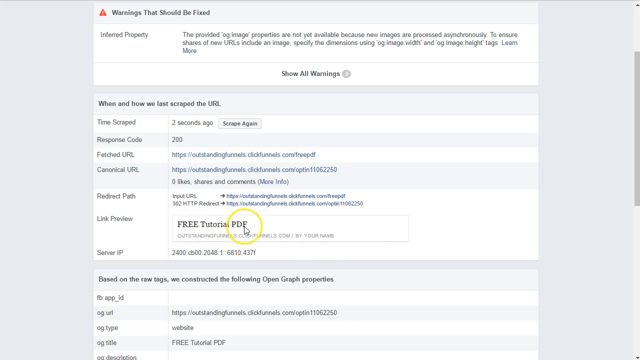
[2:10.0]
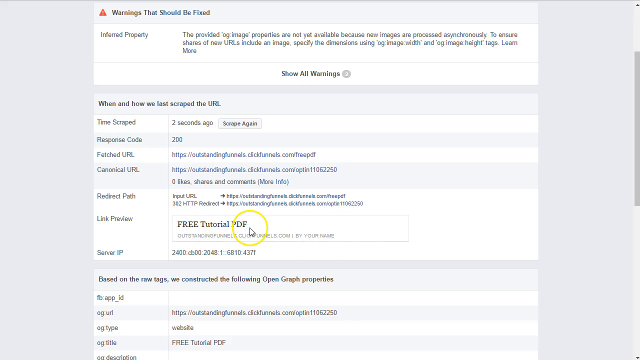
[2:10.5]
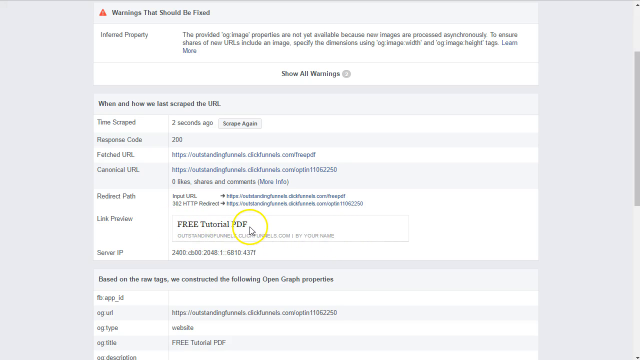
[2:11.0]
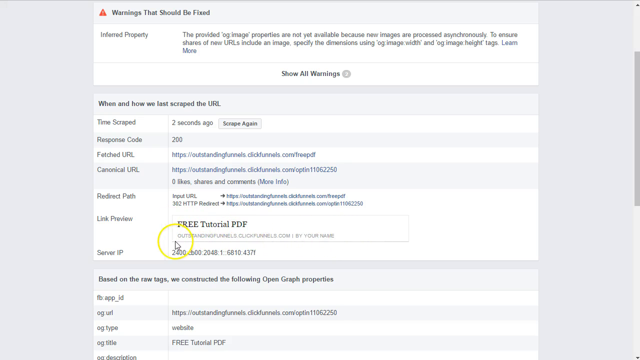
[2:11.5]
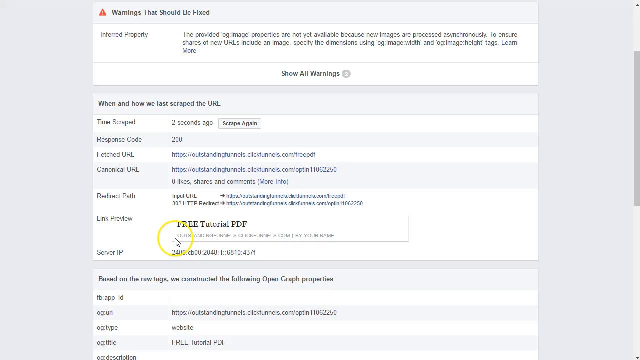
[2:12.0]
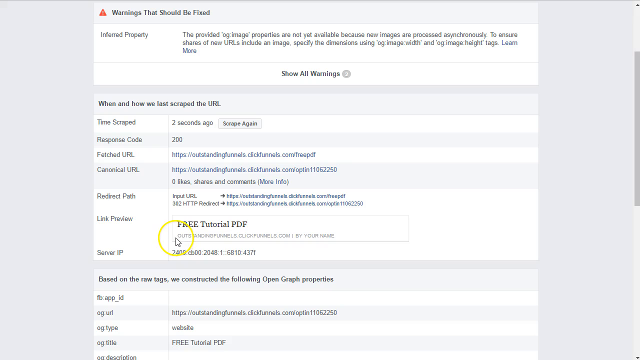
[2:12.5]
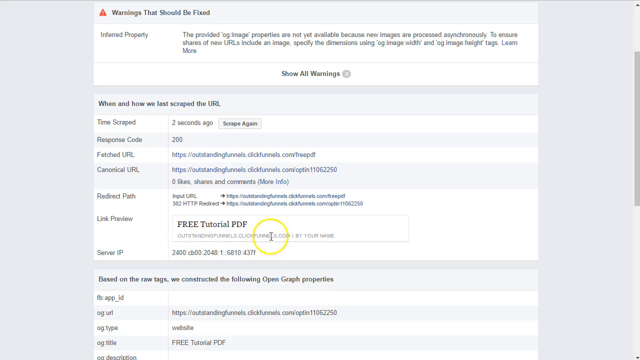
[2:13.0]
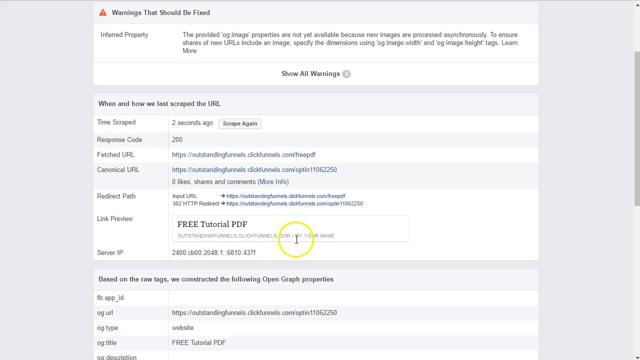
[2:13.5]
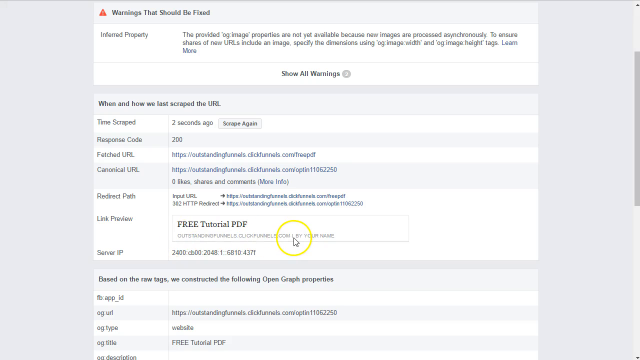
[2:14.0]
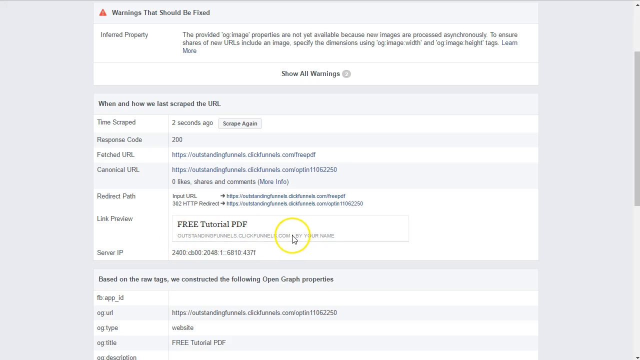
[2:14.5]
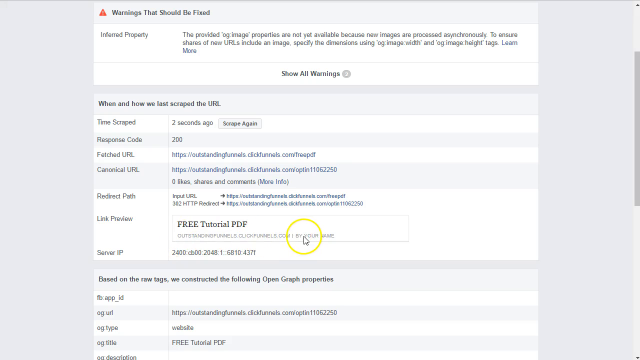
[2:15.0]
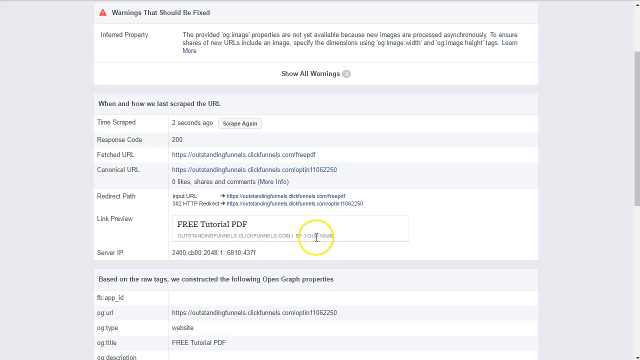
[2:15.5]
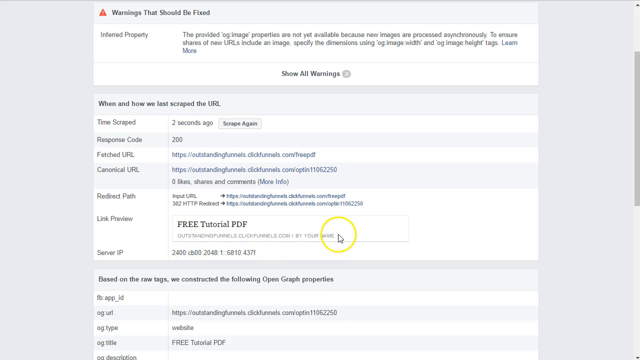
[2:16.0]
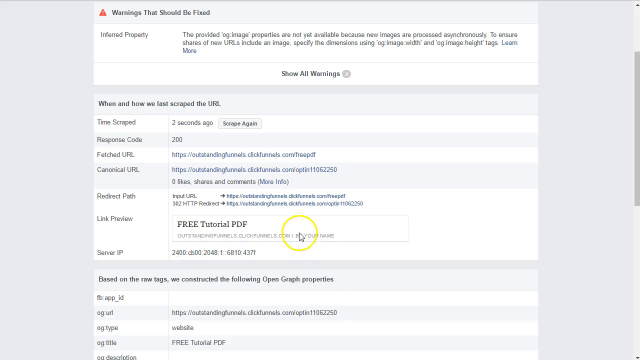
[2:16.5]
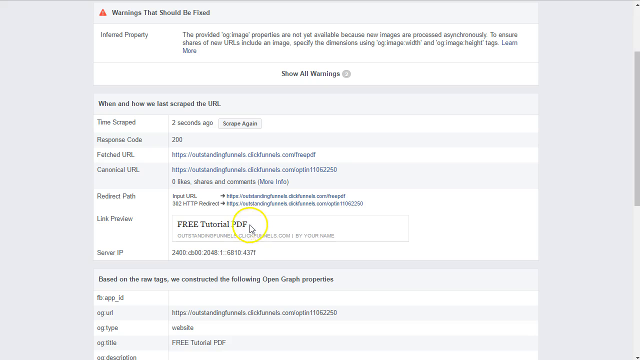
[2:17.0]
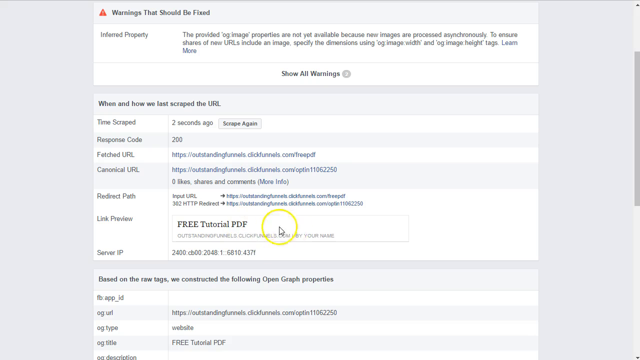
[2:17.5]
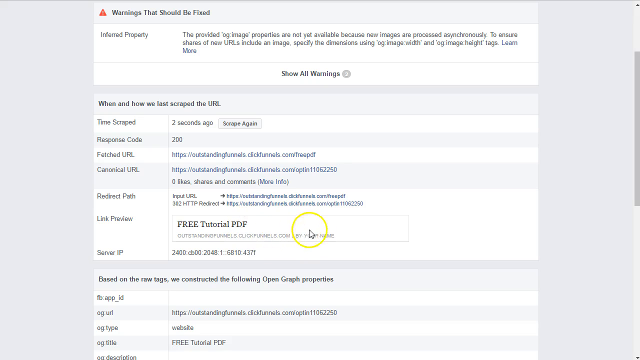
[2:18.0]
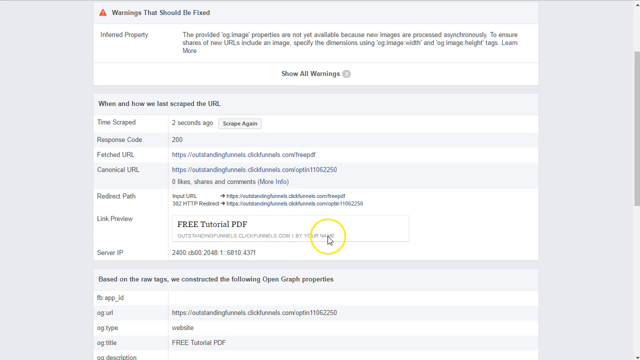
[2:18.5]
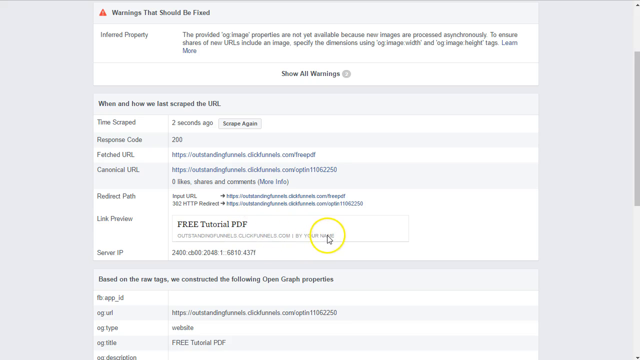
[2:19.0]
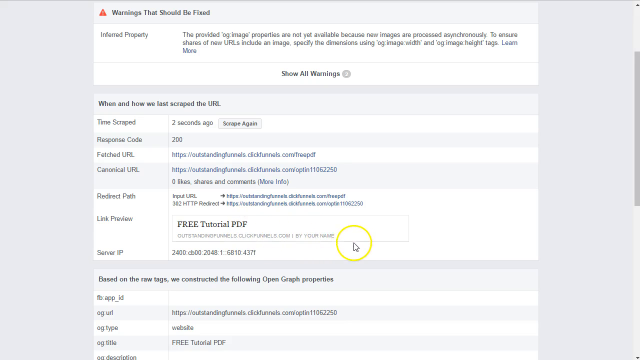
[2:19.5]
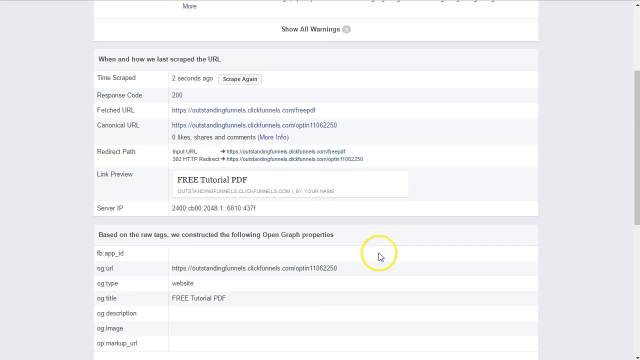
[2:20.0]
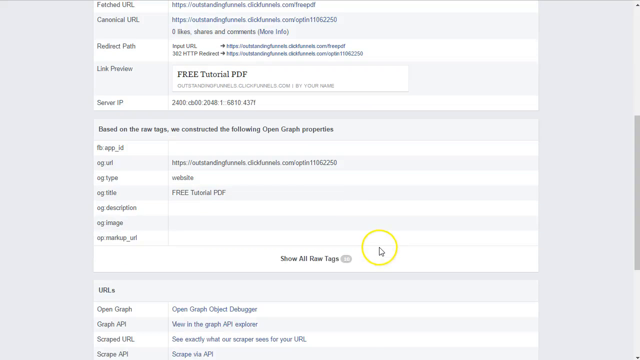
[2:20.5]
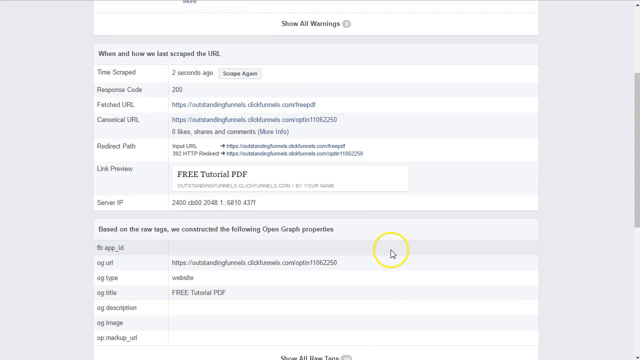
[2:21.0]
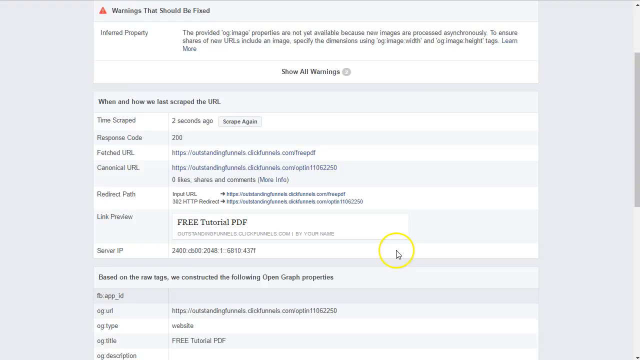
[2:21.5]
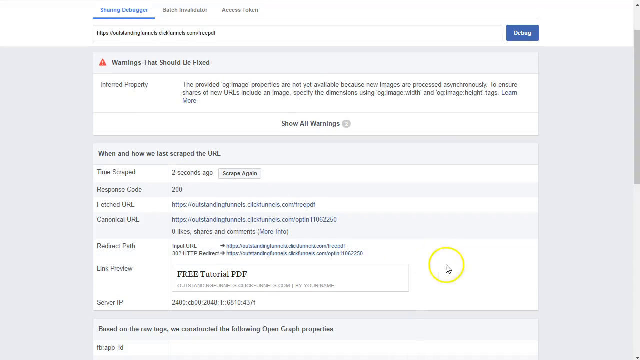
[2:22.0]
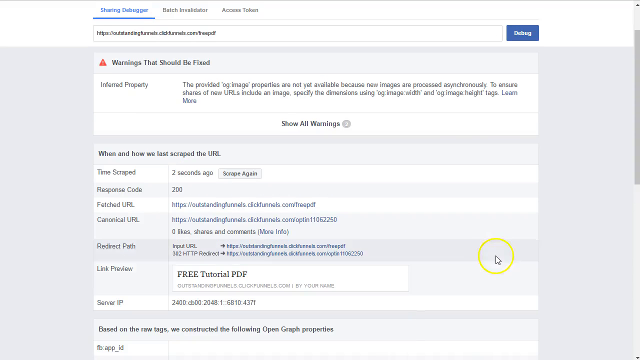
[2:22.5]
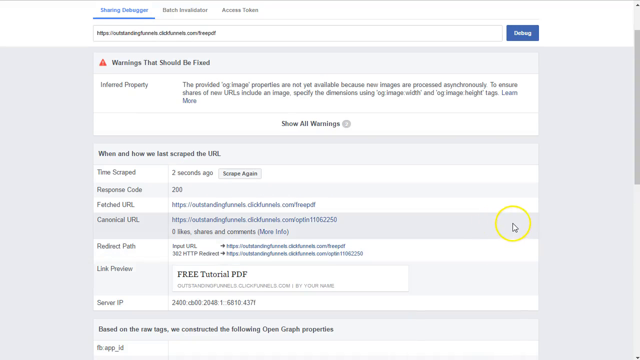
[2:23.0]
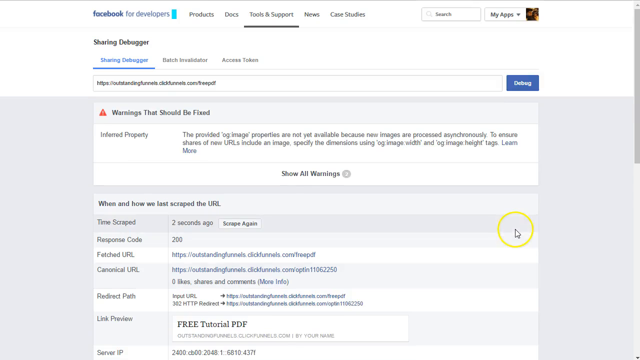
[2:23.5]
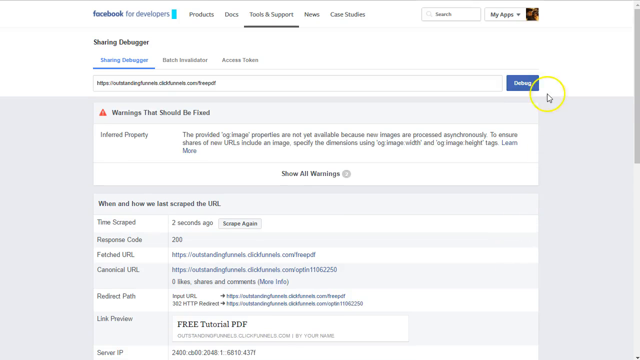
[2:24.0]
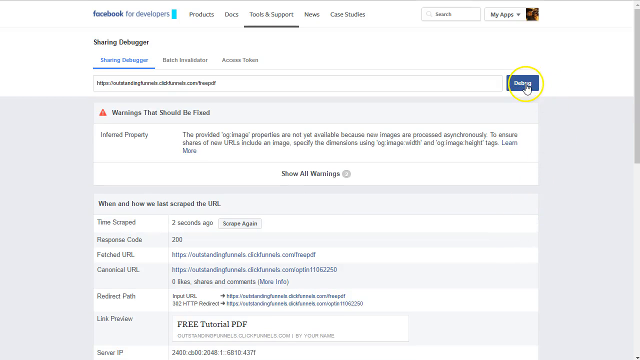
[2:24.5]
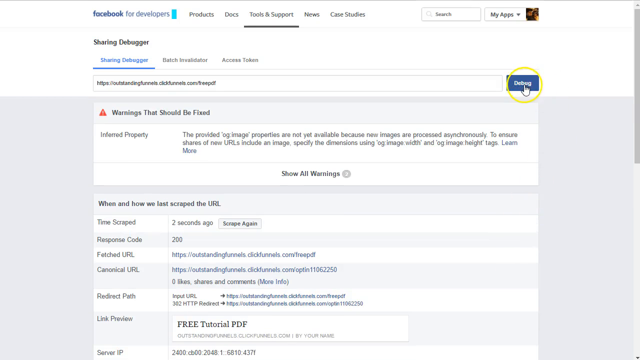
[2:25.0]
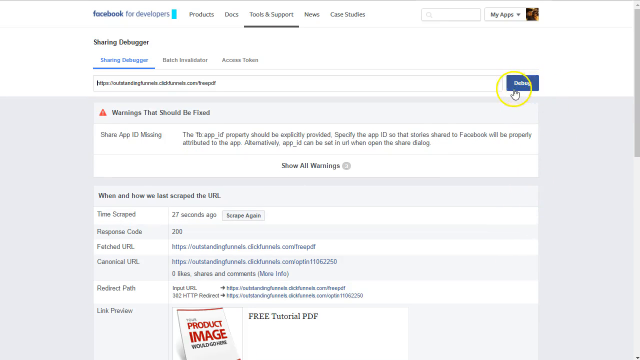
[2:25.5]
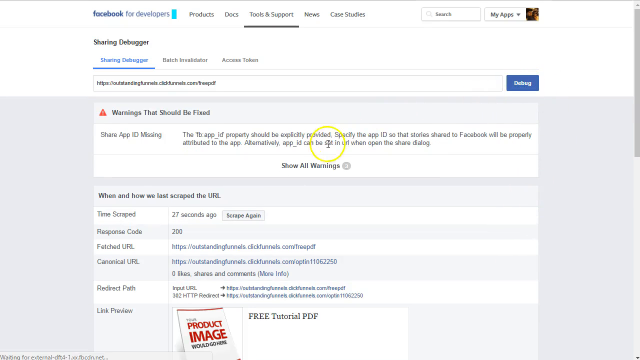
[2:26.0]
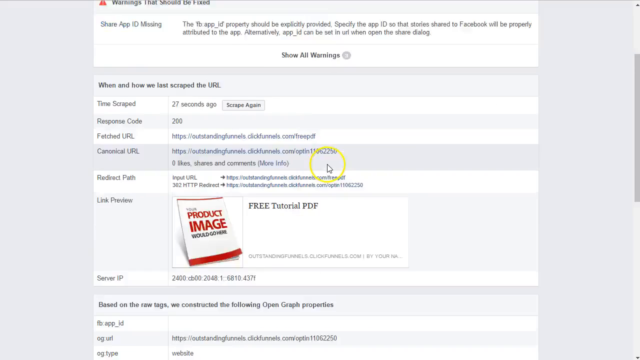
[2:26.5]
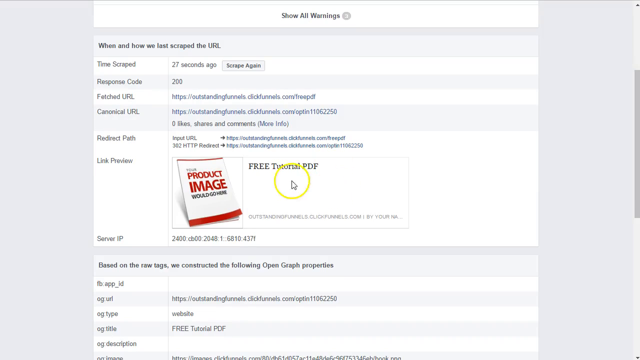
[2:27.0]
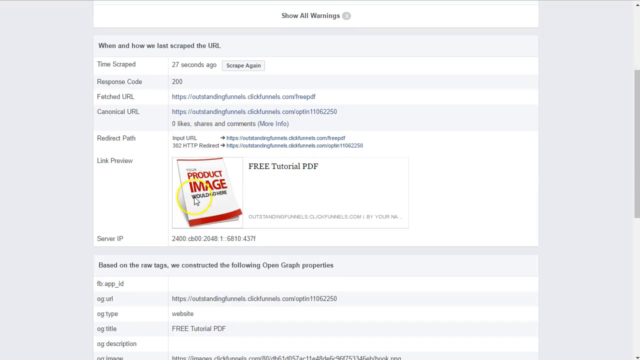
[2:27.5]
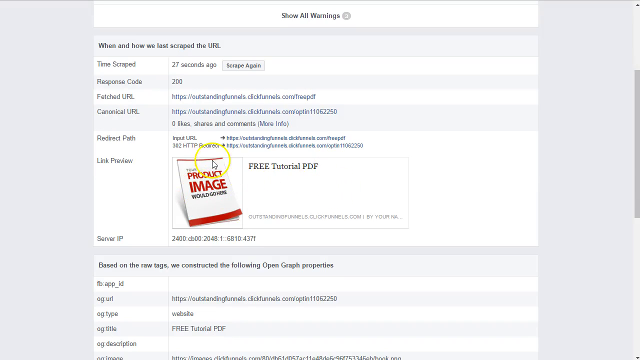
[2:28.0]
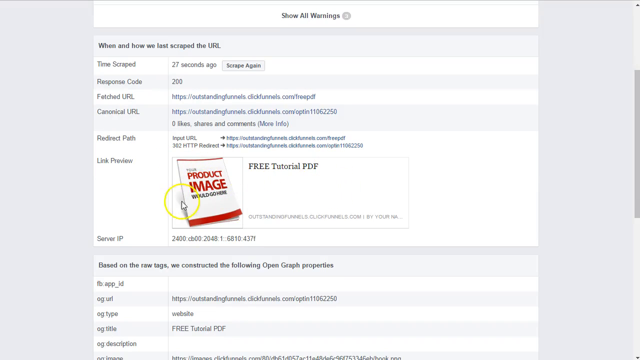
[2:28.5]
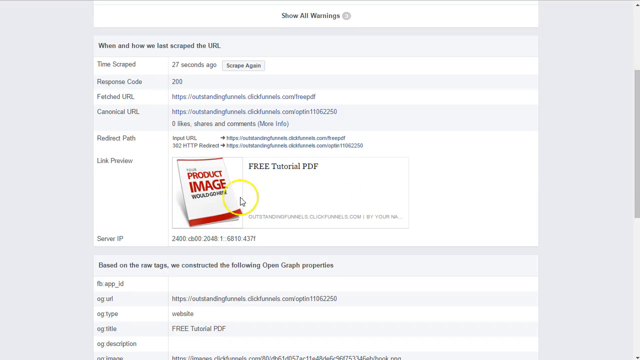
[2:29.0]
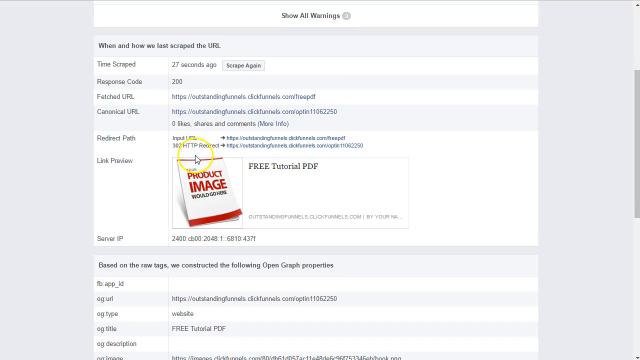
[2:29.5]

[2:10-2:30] A website says "warnings that should be fixed" at the top, along with "show all warnings." The print is very small and hard to read, but the page shows warnings. The cursor, circled in yellow, is moved around and hovers over the area that says "free tutorial pdf." The page is scrolled up to an area offering a free book, a free tutorial on how to place a business image or ad on the book.